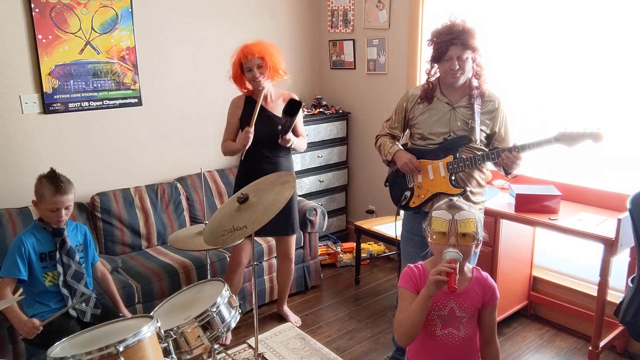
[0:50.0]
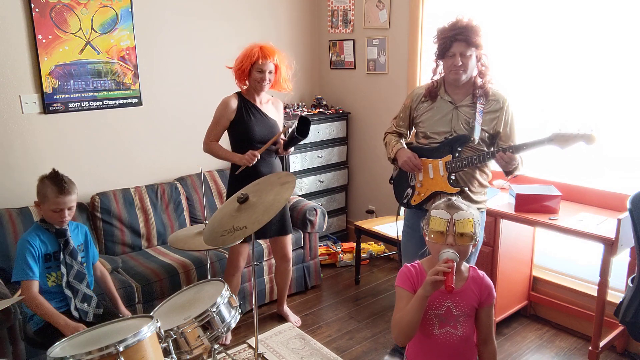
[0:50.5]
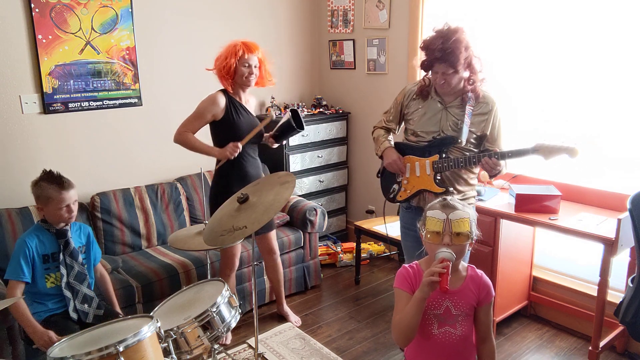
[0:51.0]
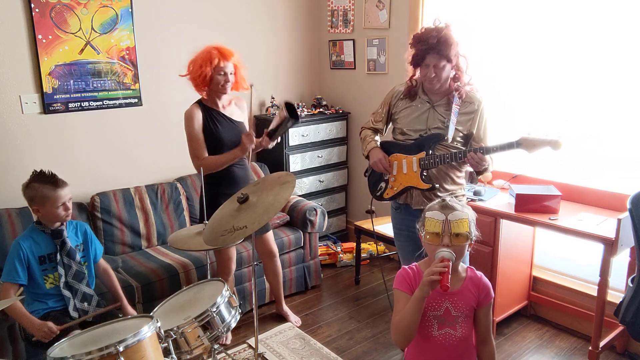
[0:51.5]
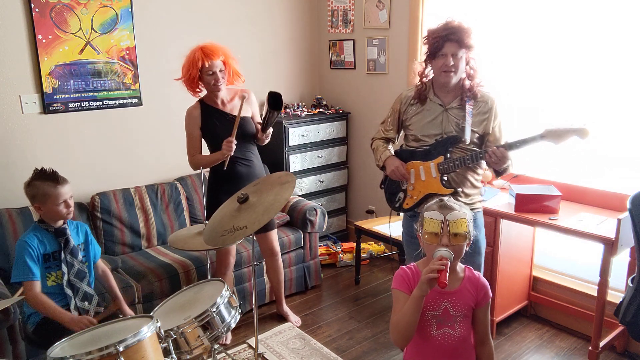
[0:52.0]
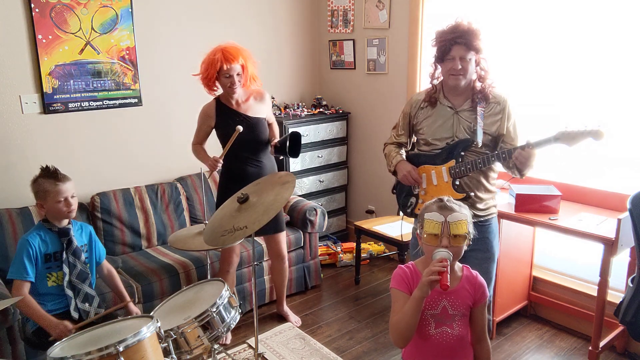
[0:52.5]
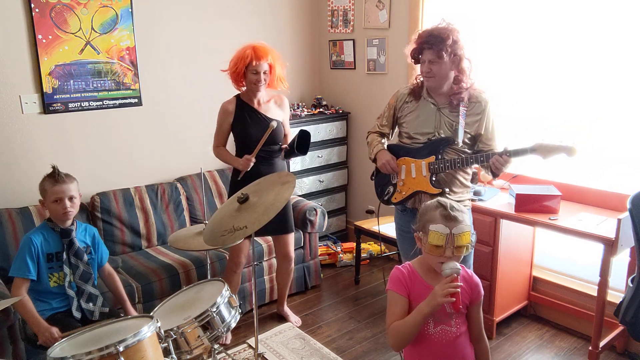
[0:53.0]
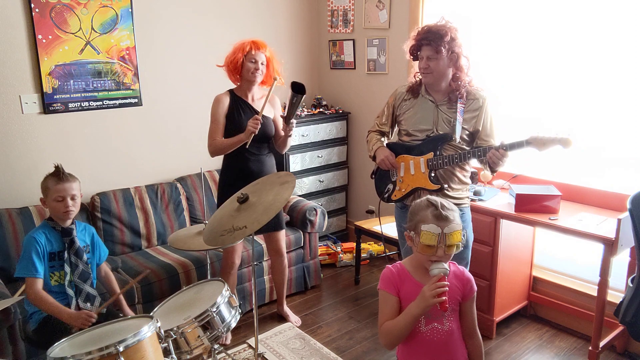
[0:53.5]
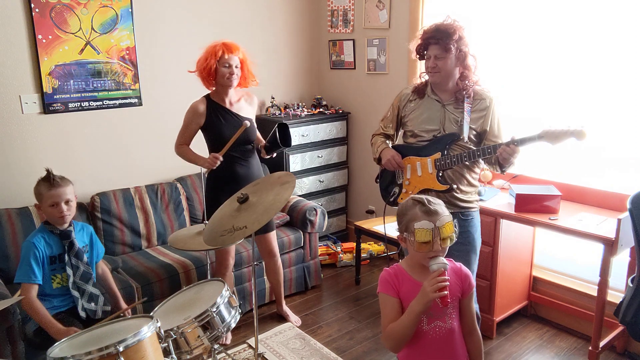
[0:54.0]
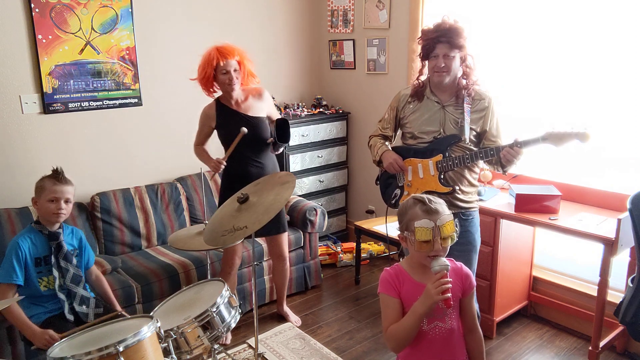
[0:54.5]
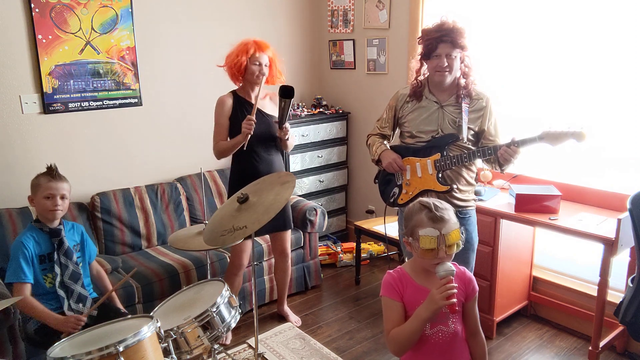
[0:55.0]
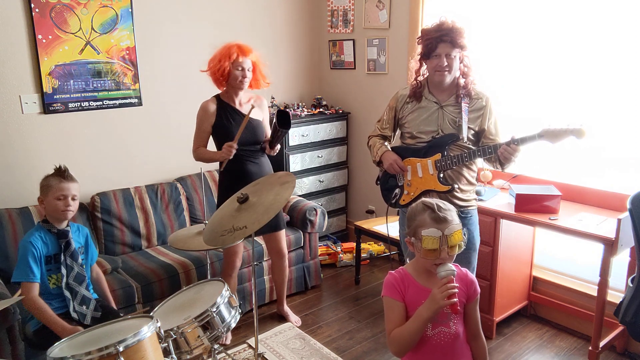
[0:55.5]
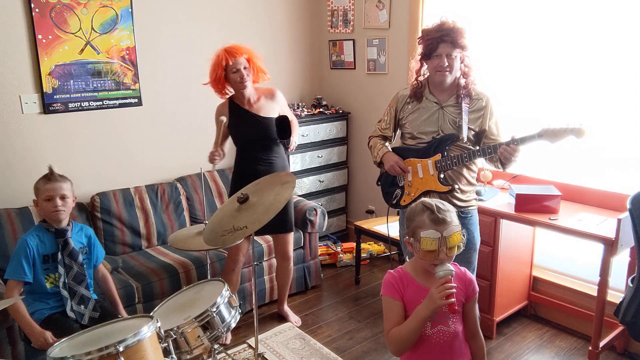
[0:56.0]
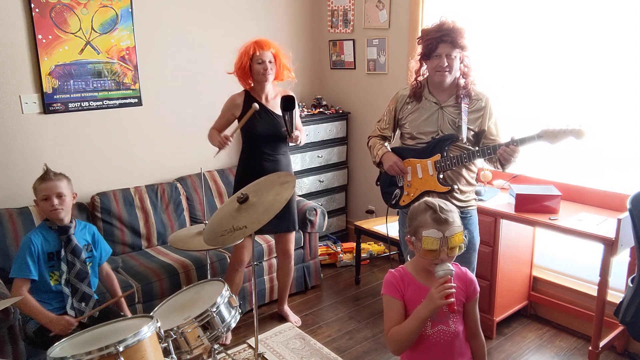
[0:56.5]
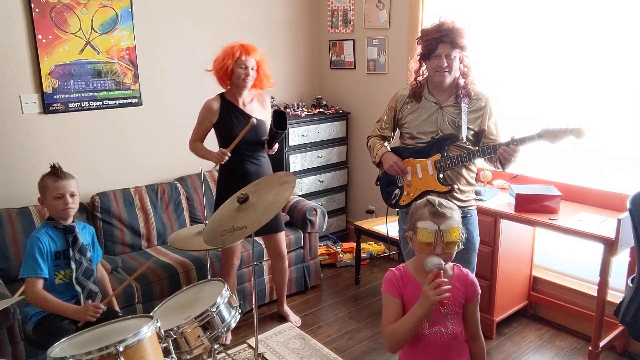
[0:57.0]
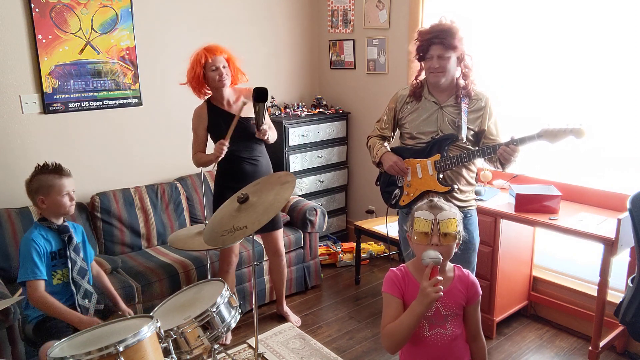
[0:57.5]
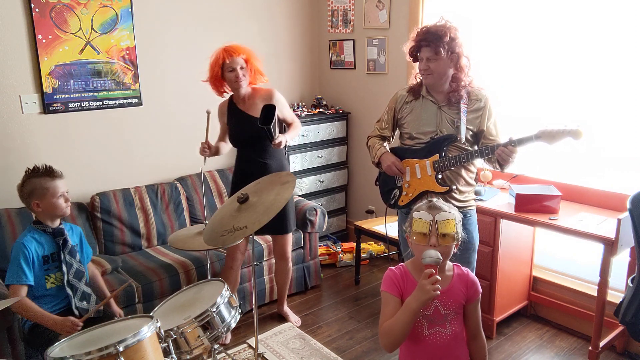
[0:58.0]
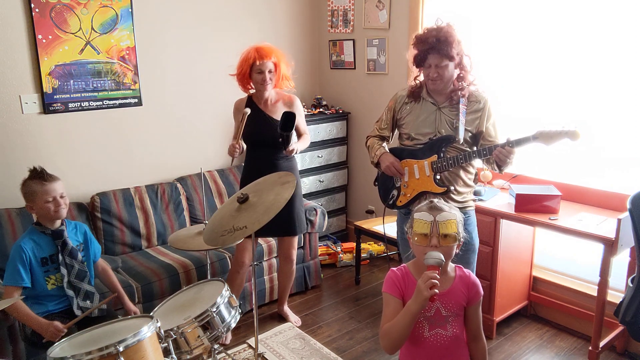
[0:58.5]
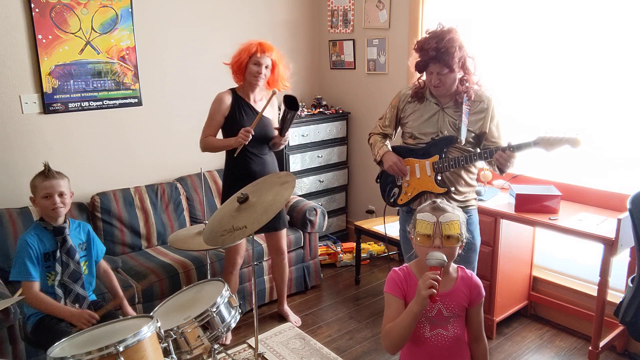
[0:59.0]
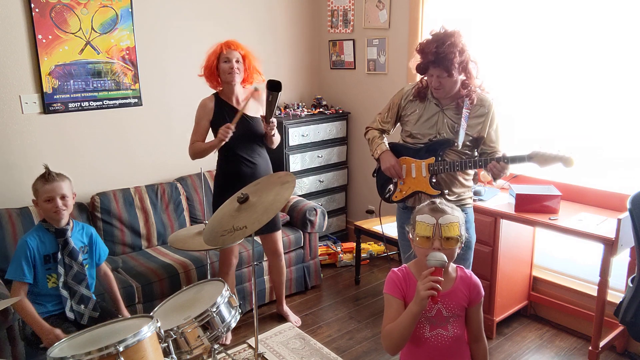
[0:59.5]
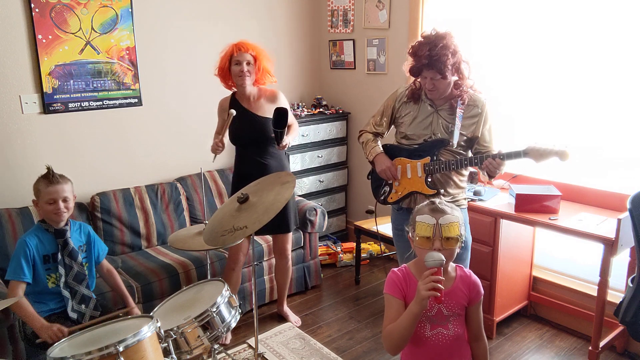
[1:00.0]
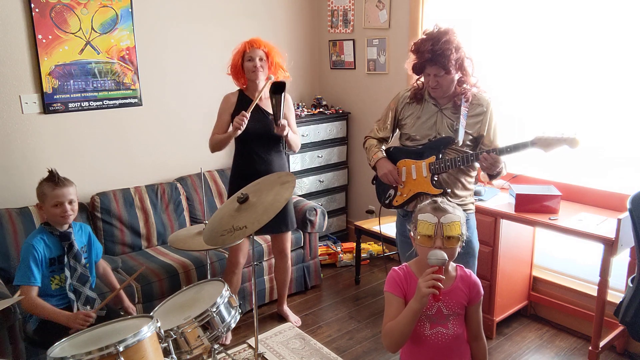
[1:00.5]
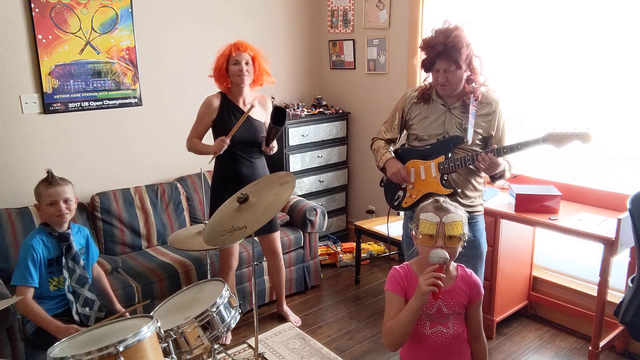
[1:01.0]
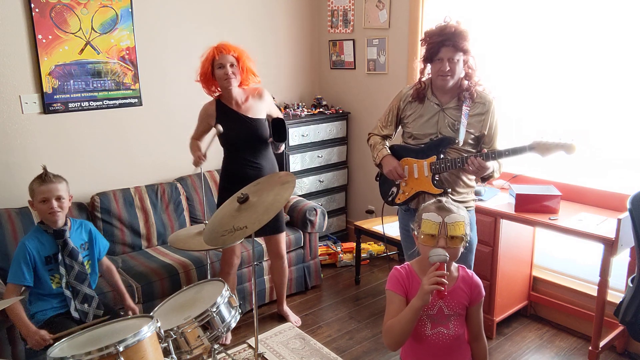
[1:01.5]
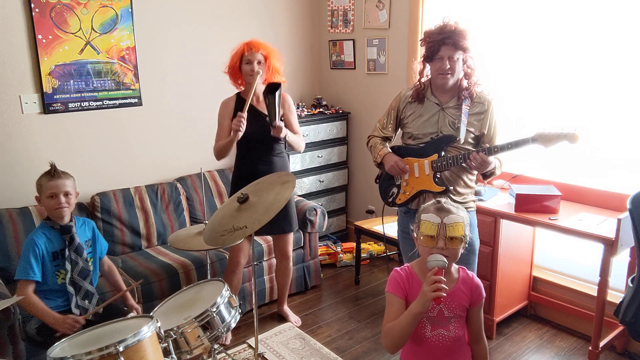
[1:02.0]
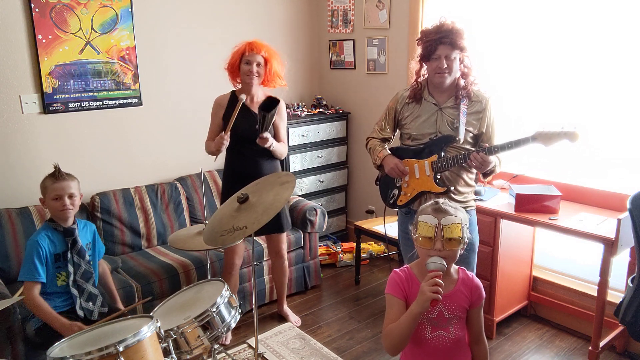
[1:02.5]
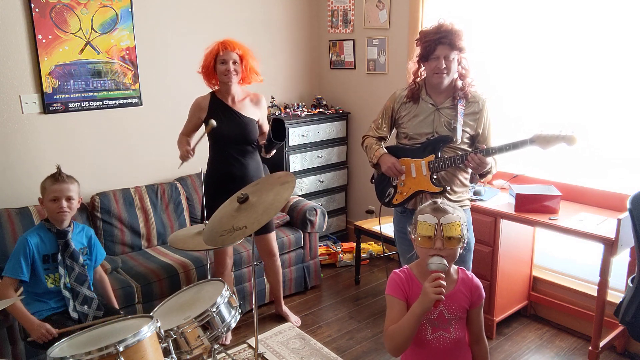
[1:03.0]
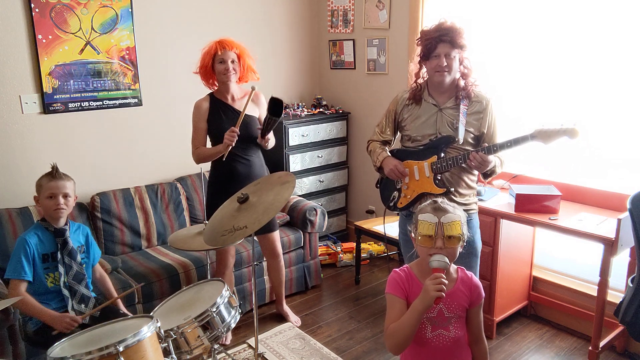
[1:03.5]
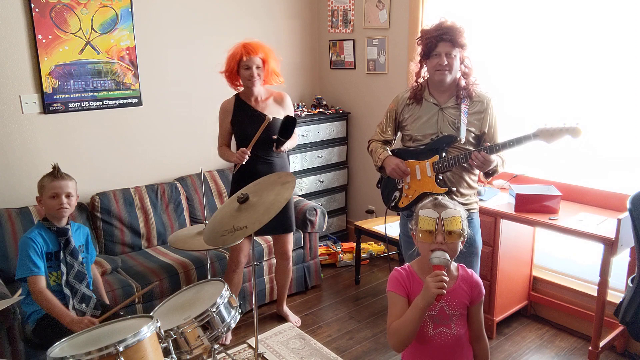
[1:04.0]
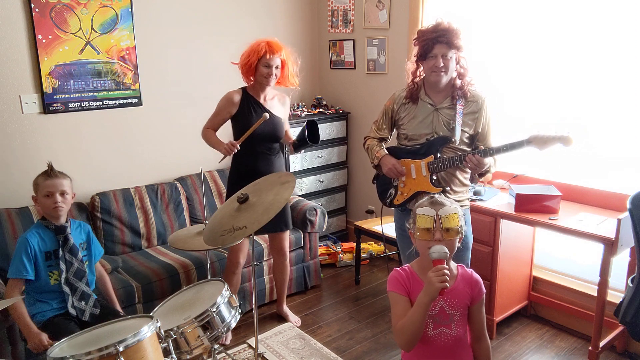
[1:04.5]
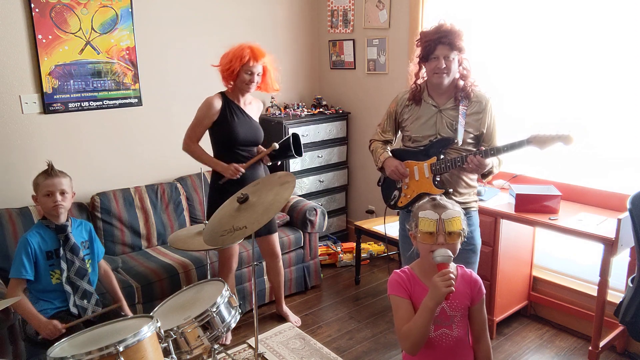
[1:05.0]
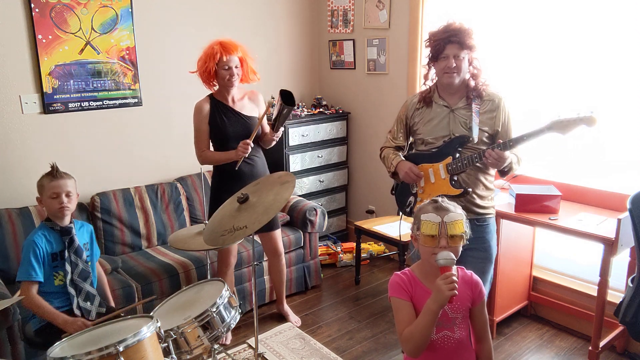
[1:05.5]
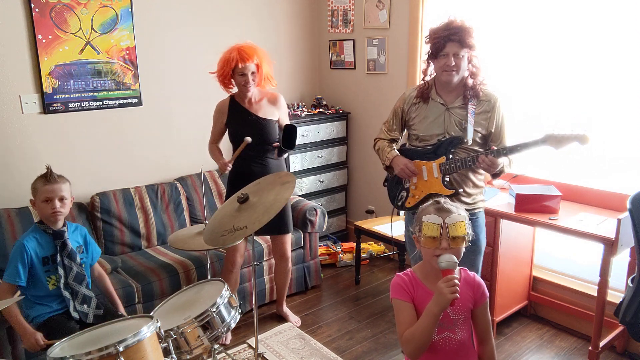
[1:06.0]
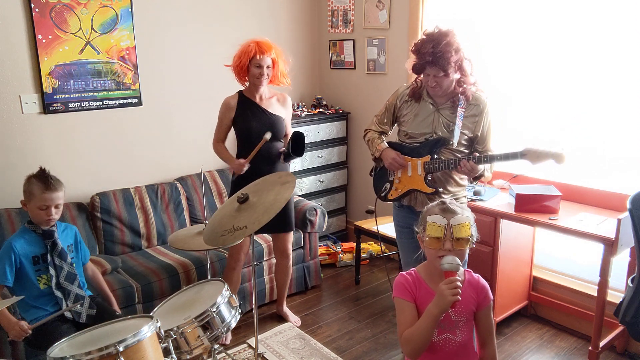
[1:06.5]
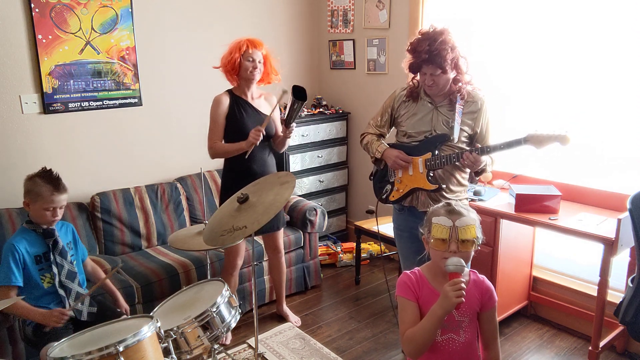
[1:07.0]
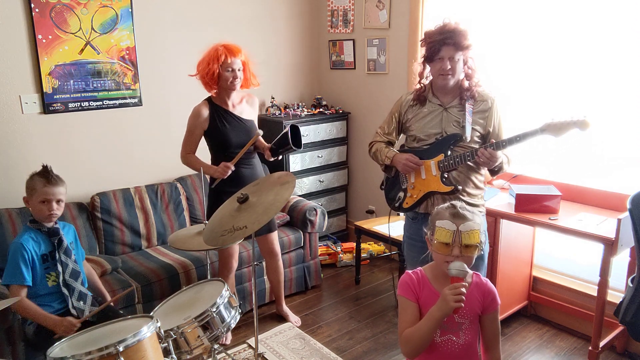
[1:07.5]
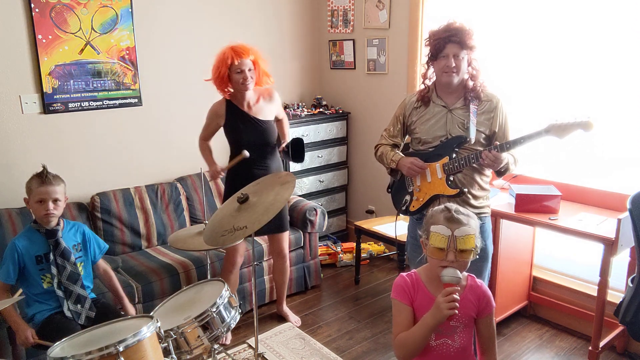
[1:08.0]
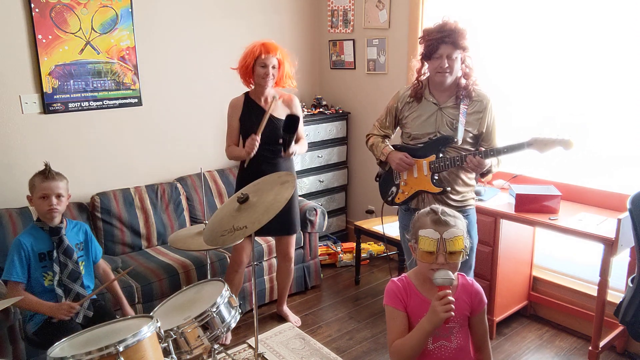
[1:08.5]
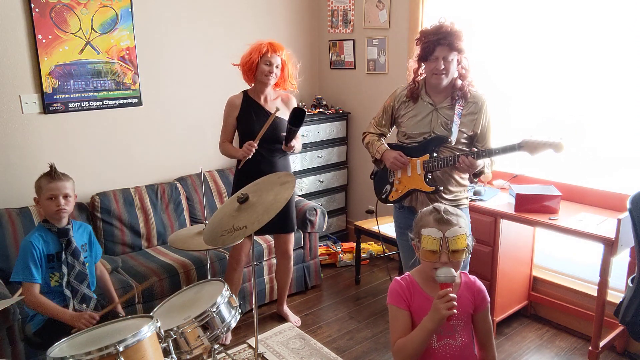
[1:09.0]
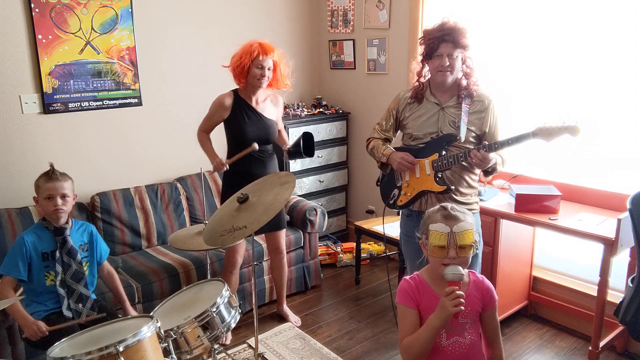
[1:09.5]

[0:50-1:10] The little girl, apparently the youngest of the family, sings; she looks down a little and then looks up again. The brother smiles more, and the mother dances, swaying back and forth. The father wears a satin, silky caramel-colored long-sleeve button-down shirt with a collar and denim blue jeans. He looks like he is playing the guitar, though it is unclear whether he is actually playing or pretending. About four picture frames are behind him on the right side. There appears to be a window, with the picture frames next to it, and a white and brown desk in front of the window; no desk chair is visible.